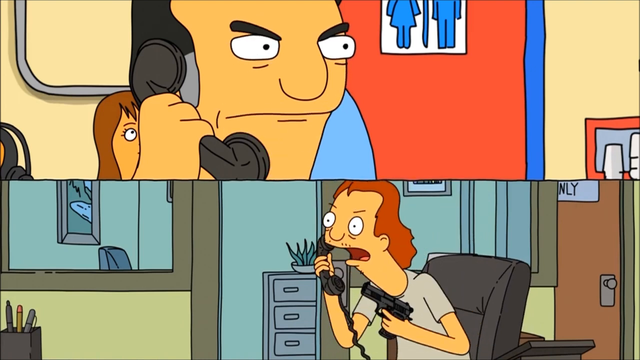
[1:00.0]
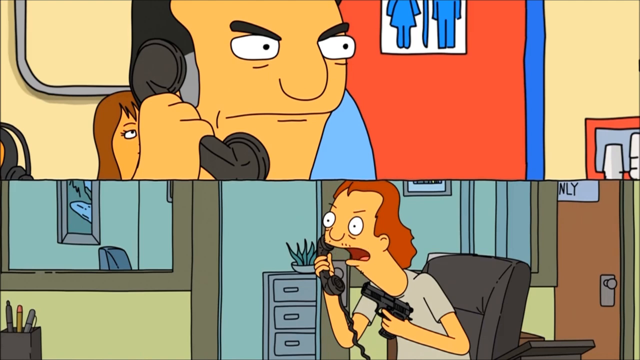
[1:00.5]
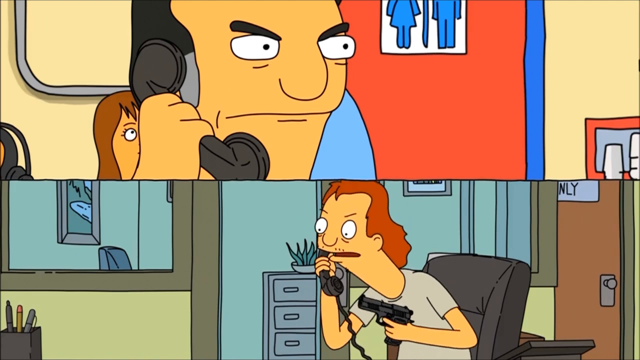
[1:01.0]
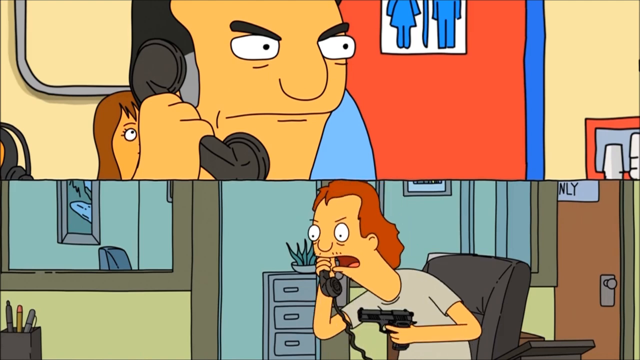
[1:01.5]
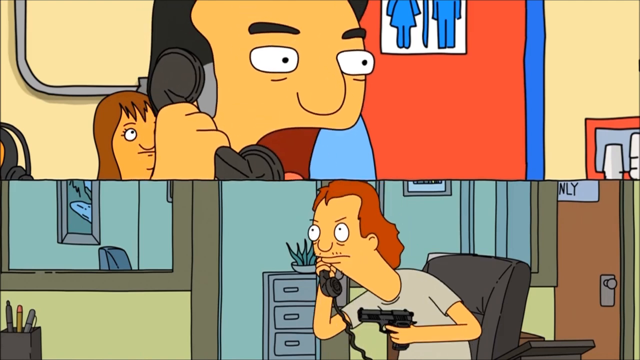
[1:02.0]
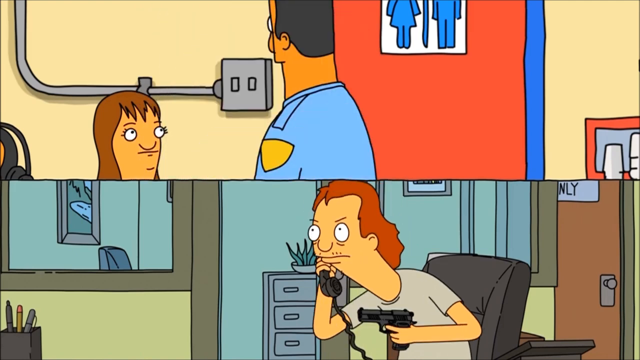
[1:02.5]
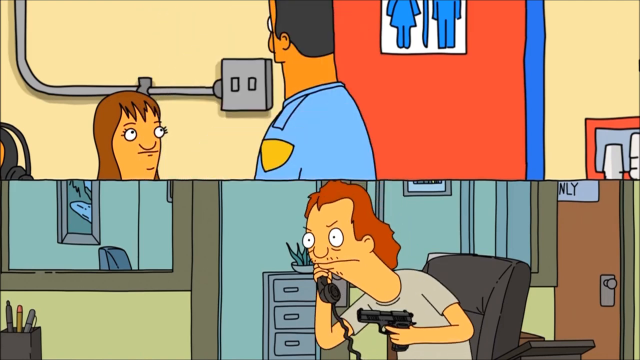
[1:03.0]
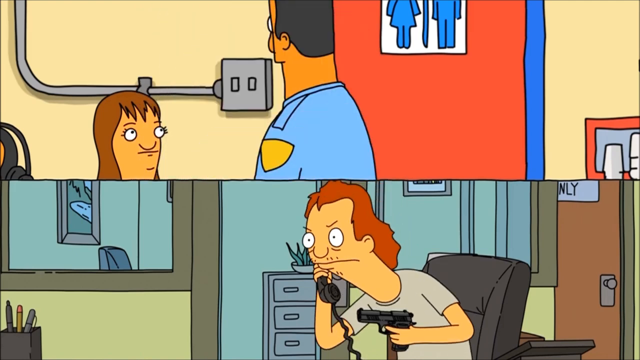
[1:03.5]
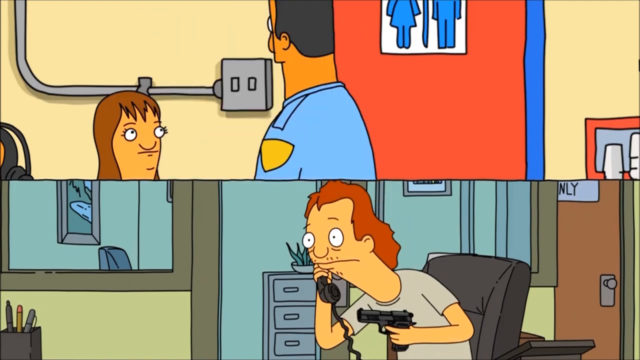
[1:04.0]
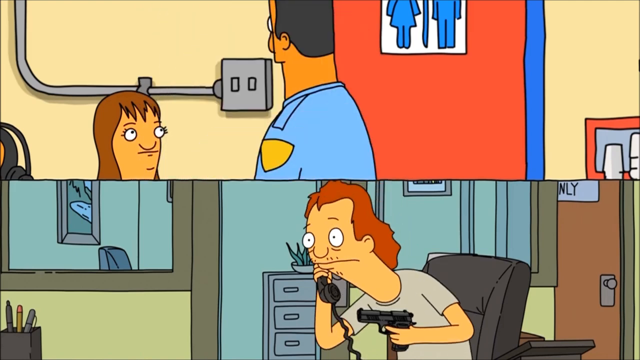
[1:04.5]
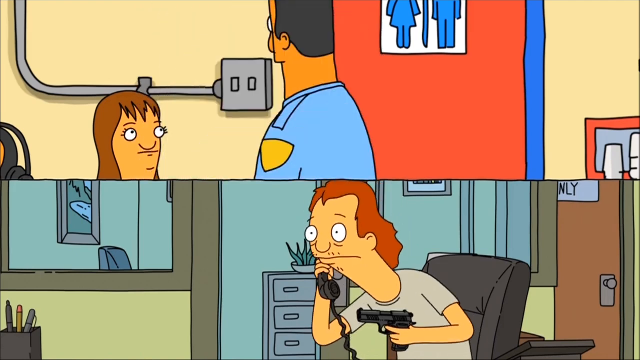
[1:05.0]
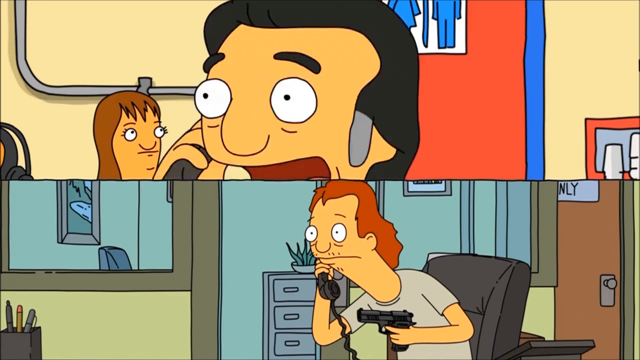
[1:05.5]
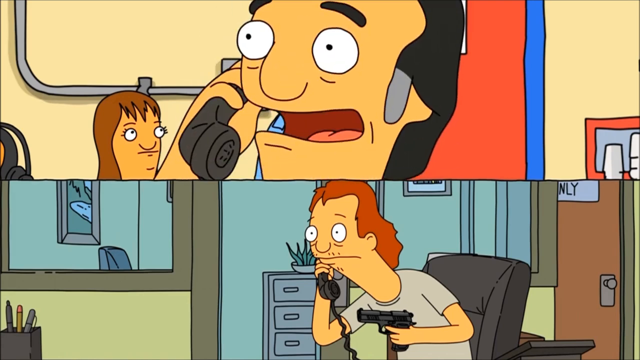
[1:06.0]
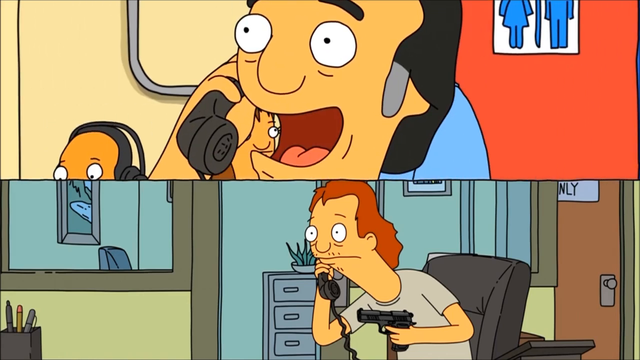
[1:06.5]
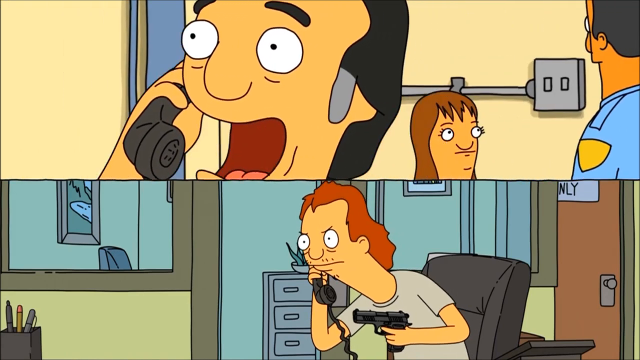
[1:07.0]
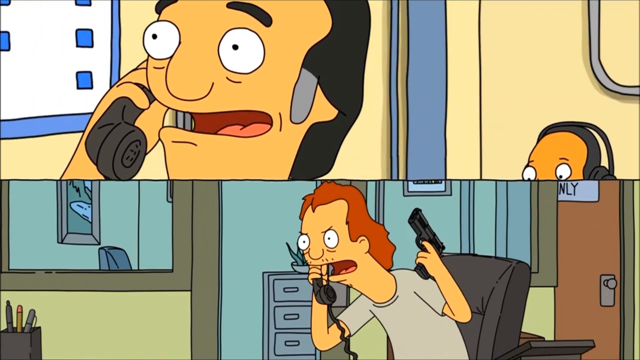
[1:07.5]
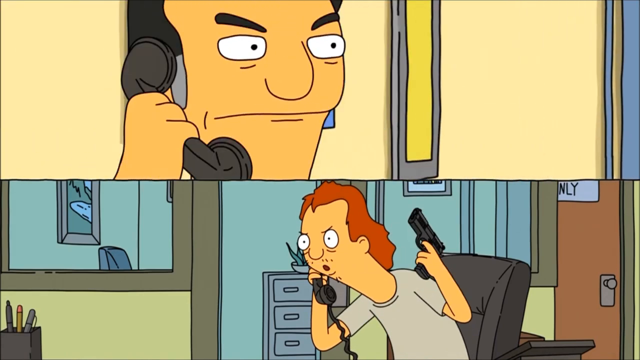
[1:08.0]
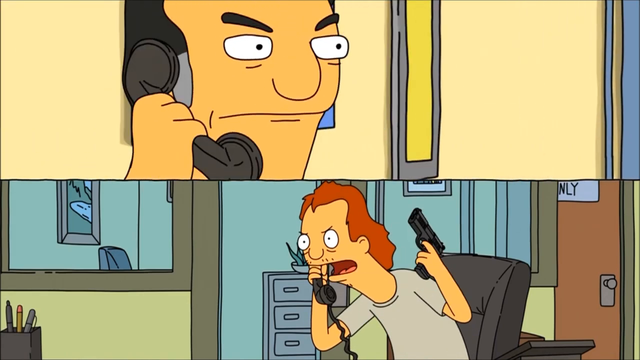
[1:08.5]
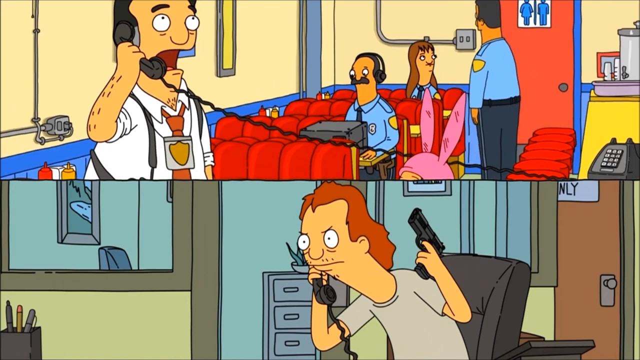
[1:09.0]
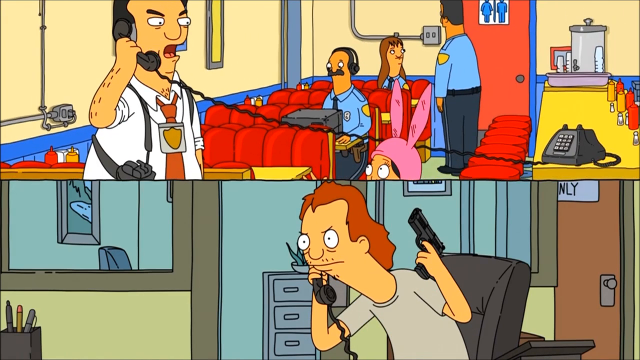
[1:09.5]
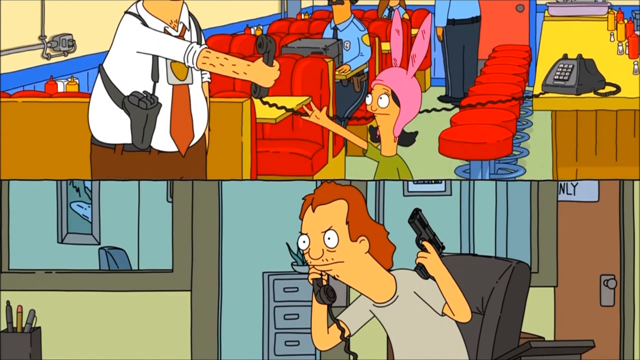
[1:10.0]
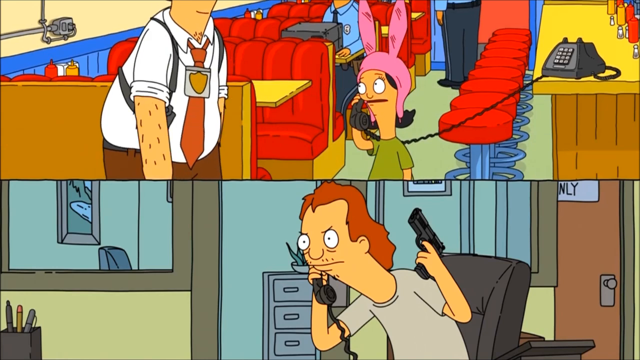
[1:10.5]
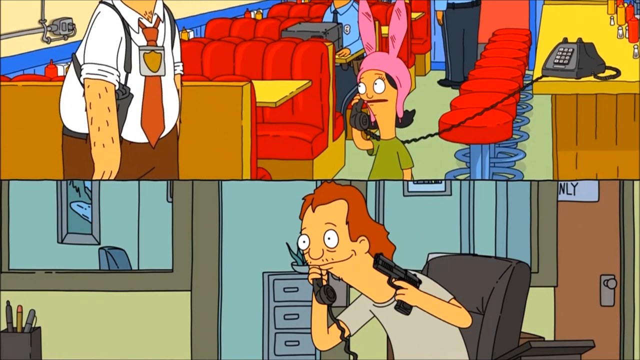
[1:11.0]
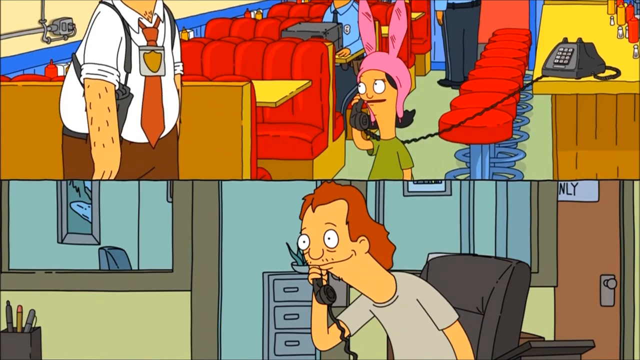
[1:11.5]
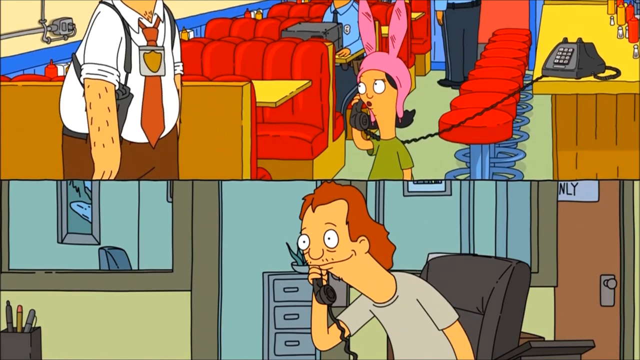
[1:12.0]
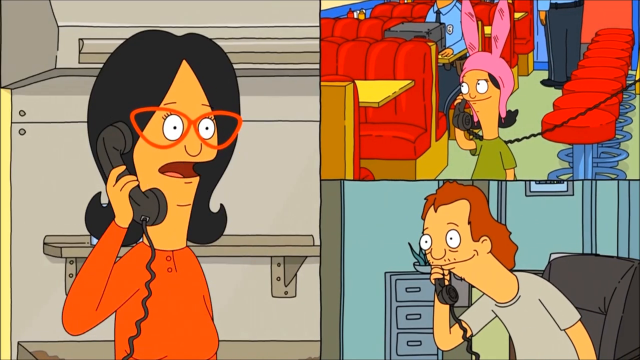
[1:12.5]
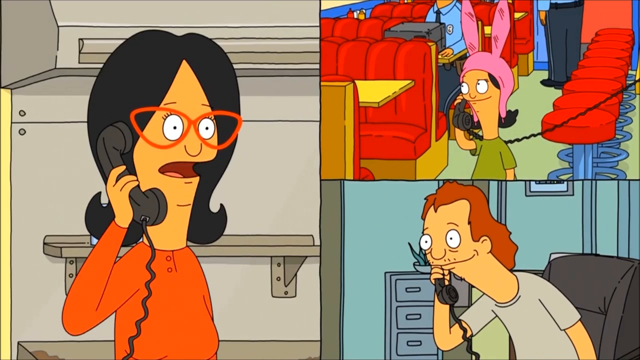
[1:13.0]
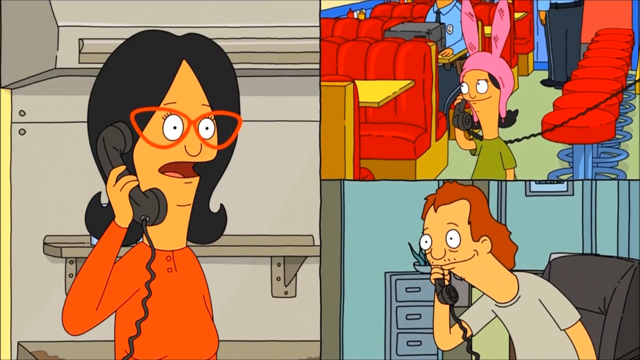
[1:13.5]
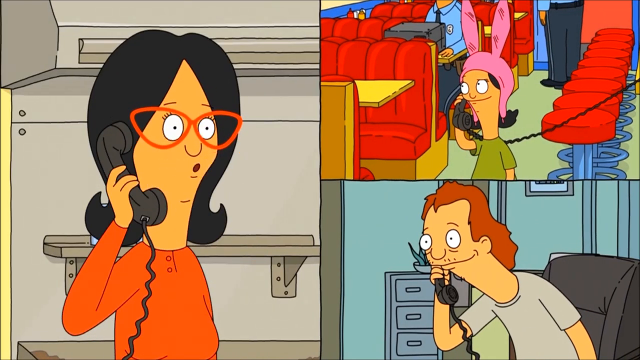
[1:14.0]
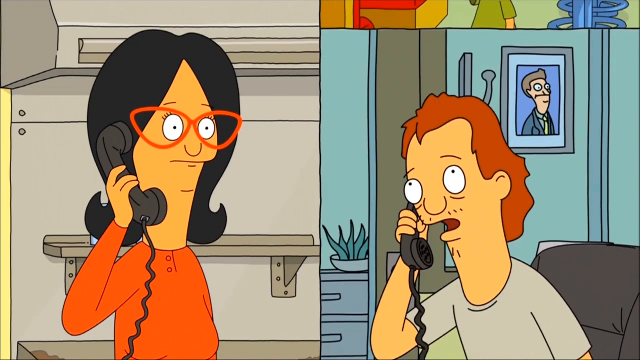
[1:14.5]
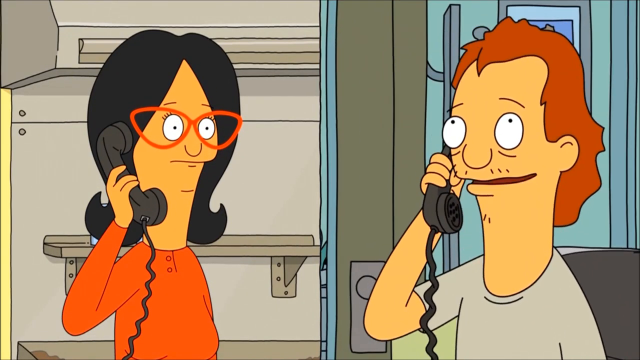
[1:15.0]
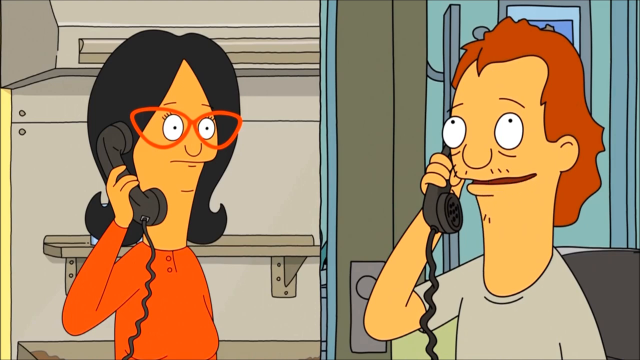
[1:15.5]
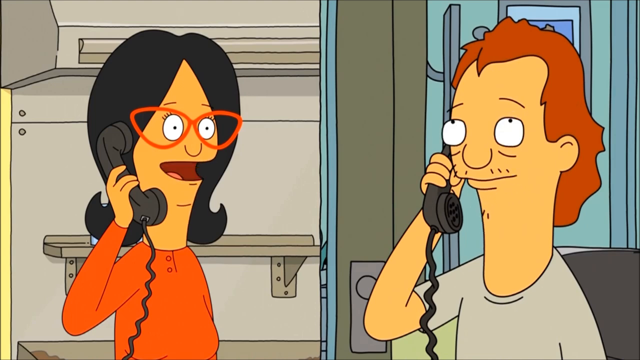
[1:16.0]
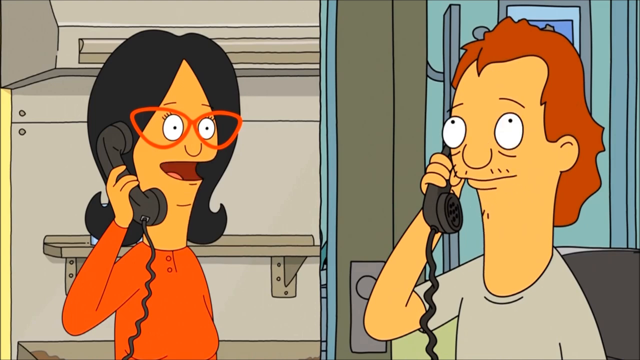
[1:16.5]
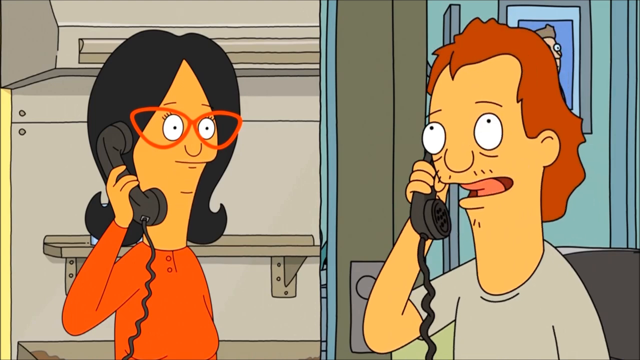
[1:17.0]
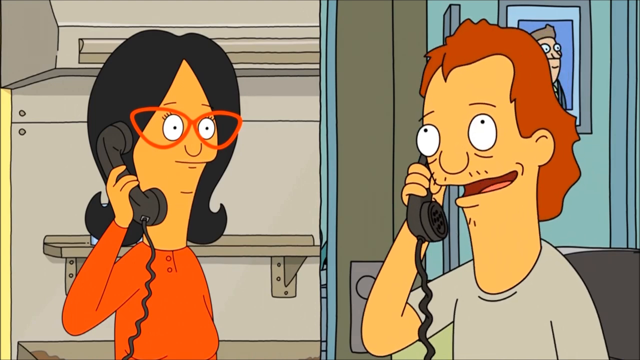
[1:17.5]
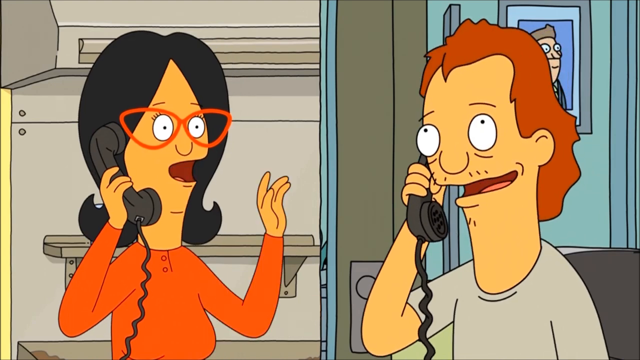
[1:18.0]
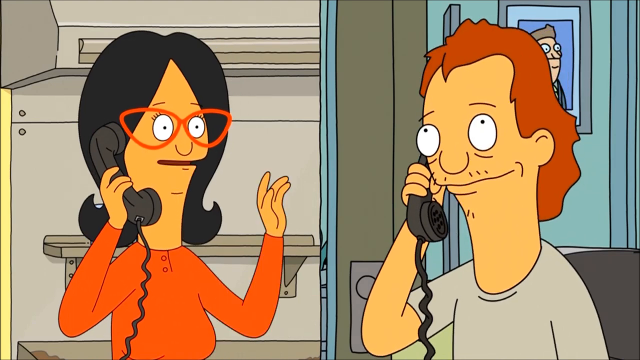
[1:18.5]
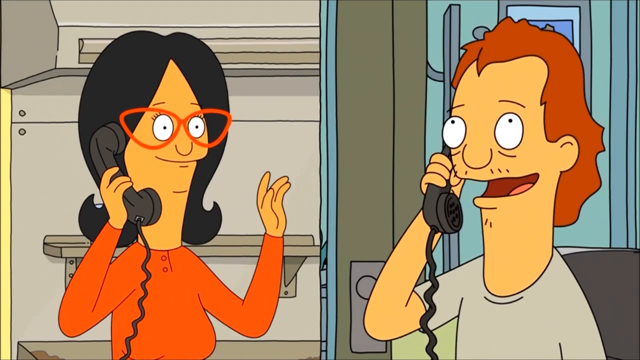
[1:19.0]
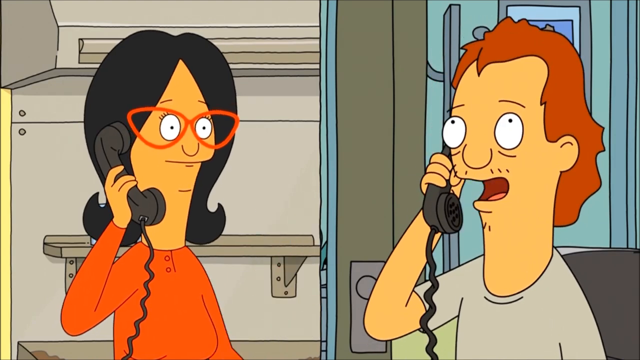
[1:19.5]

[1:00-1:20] While the two are arguing, the robber, holding his gun, talks to the detective, looking very flustered, then worried, then flustered again. The detective drops down, walks away from the girl, and hands the phone back to her, and the robber looks a little more relaxed. A third screen appears showing the lady seen at the start, in an orange shirt and orange glasses, who is also on the same line. She talks to the robber, and the exchange is not as aggressive as when he was talking to the detective.